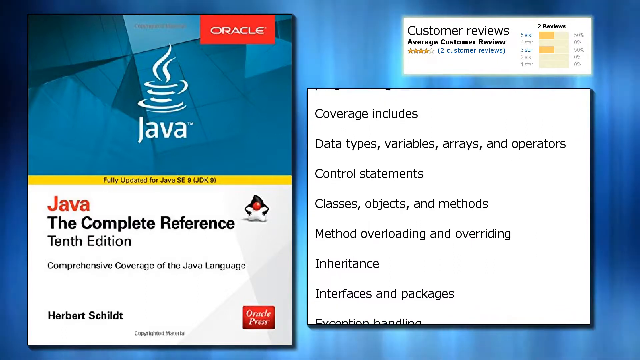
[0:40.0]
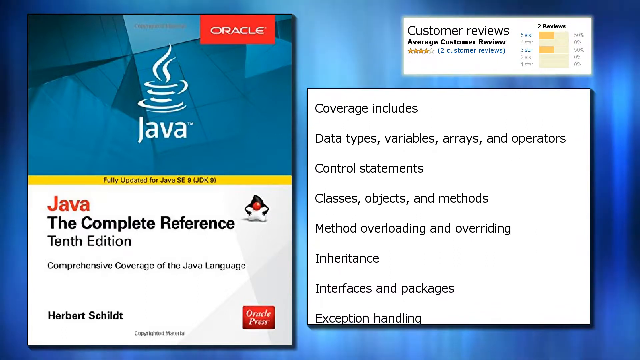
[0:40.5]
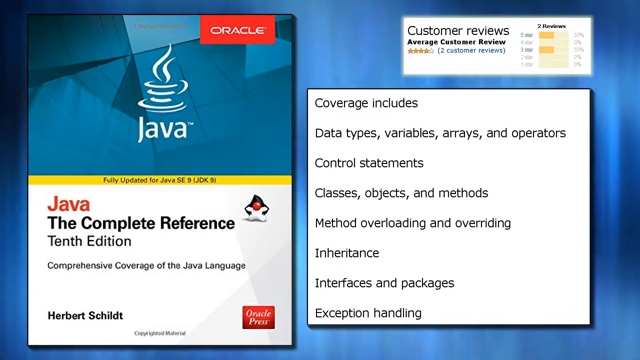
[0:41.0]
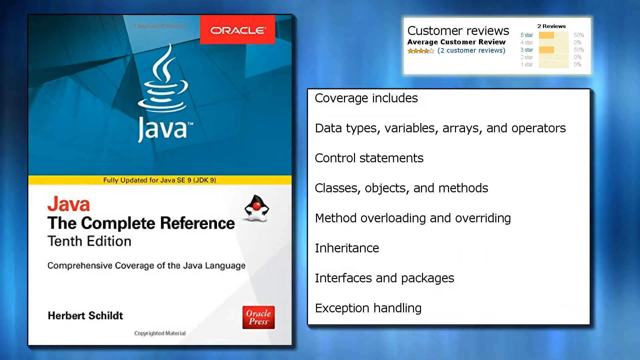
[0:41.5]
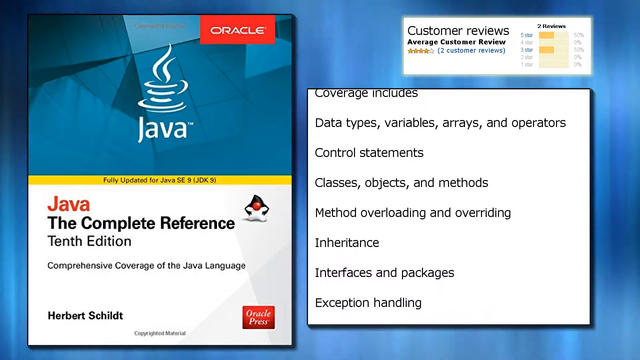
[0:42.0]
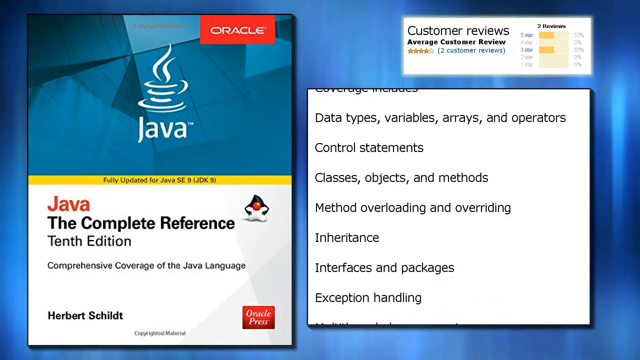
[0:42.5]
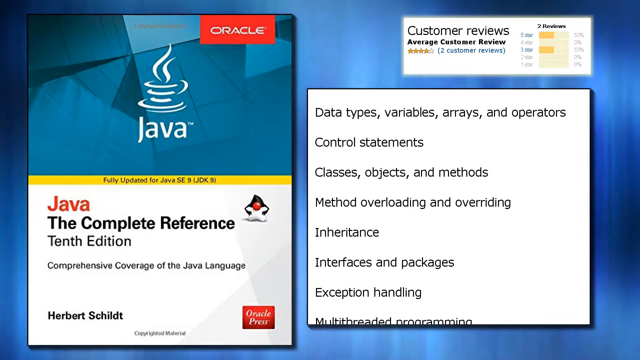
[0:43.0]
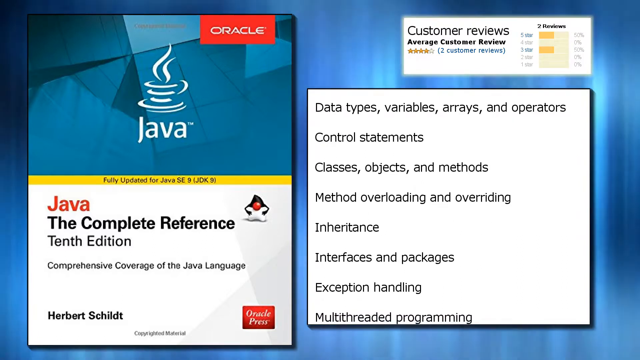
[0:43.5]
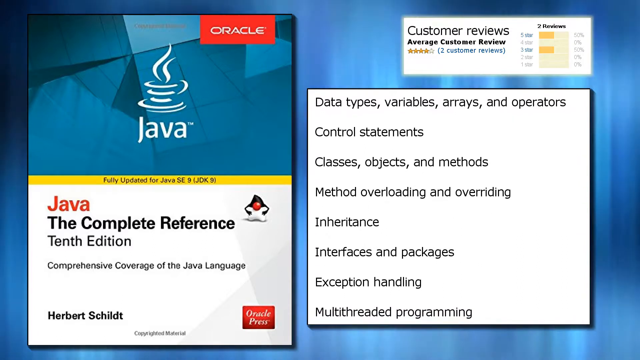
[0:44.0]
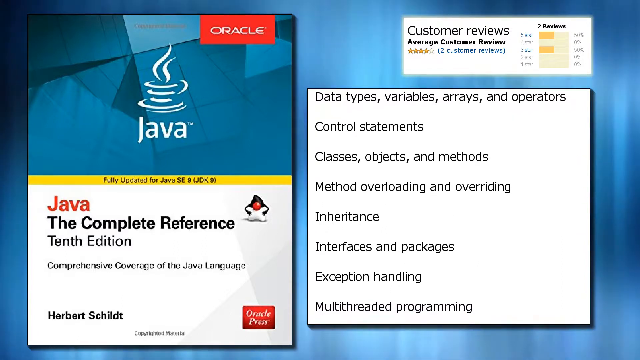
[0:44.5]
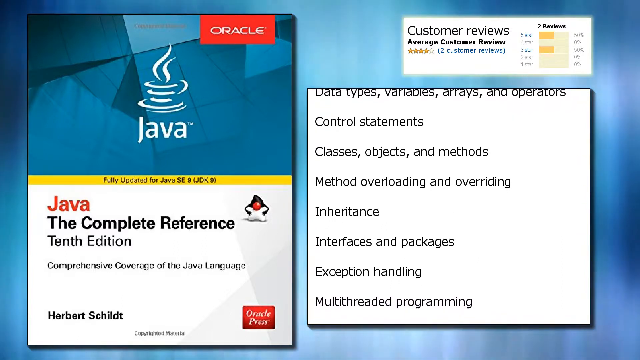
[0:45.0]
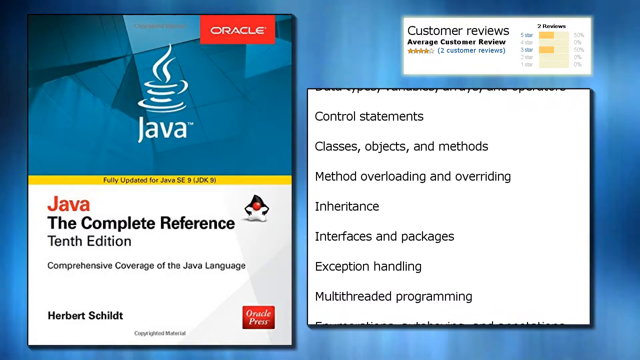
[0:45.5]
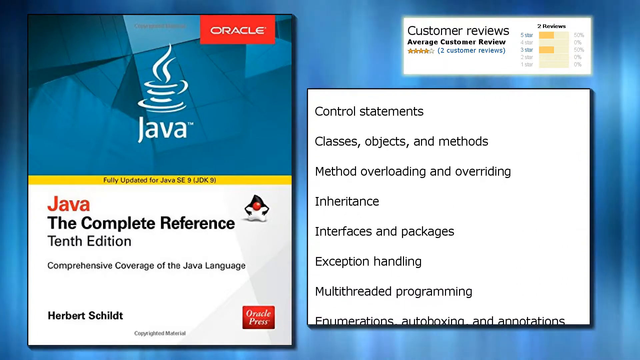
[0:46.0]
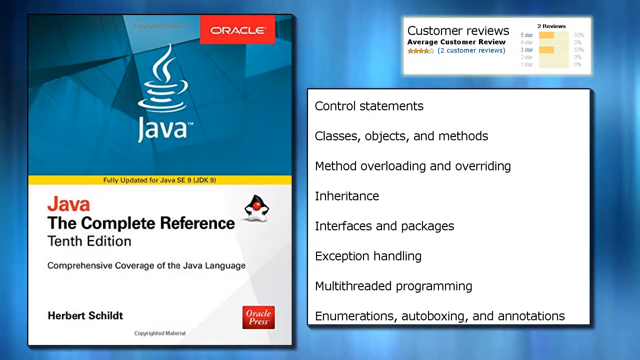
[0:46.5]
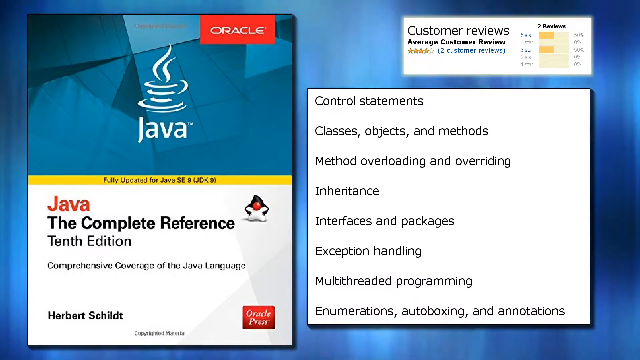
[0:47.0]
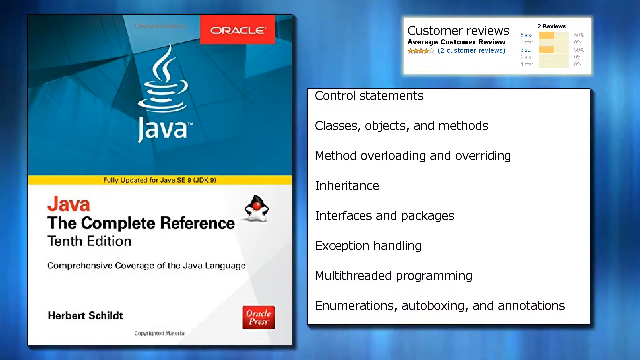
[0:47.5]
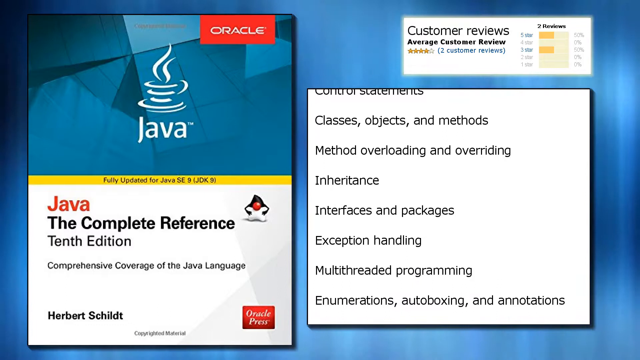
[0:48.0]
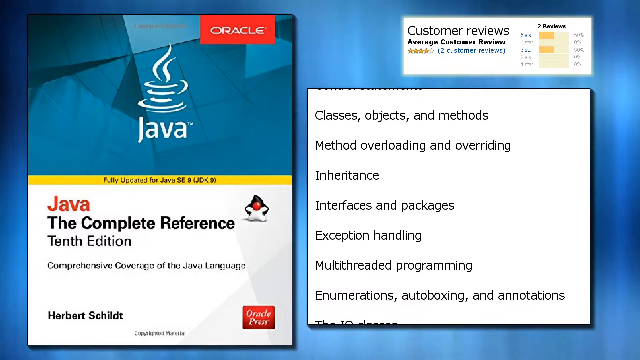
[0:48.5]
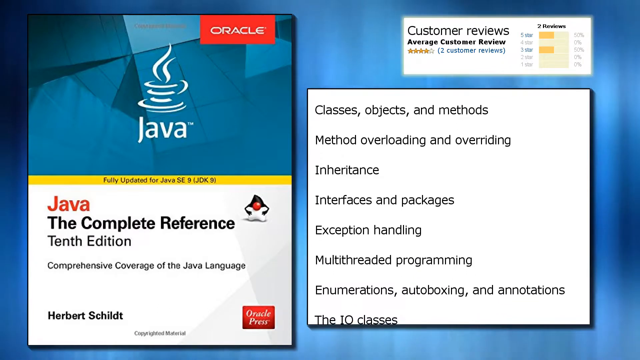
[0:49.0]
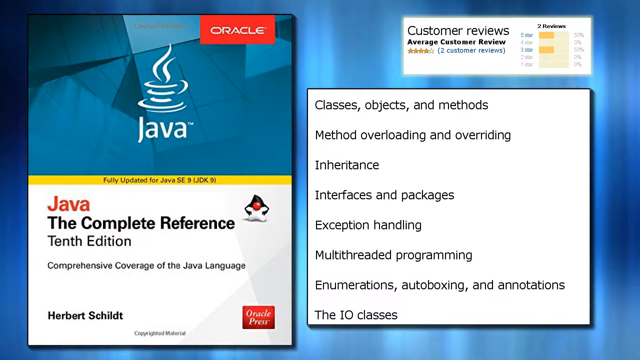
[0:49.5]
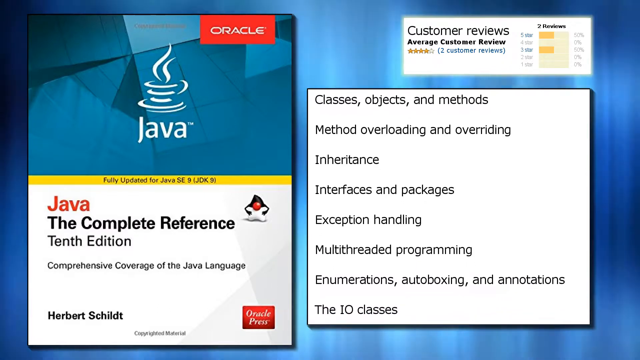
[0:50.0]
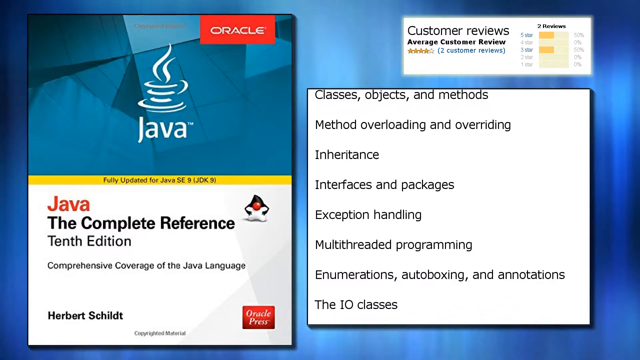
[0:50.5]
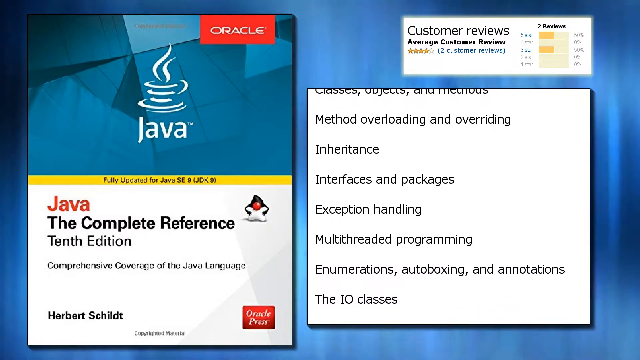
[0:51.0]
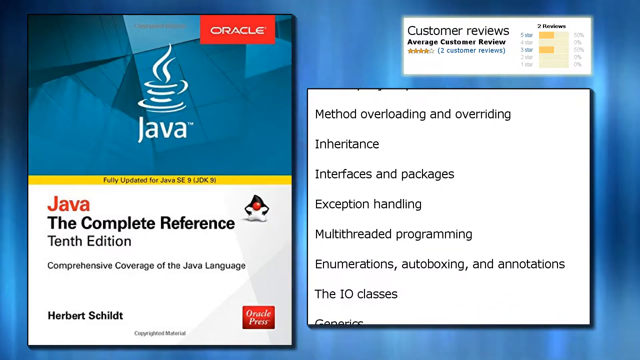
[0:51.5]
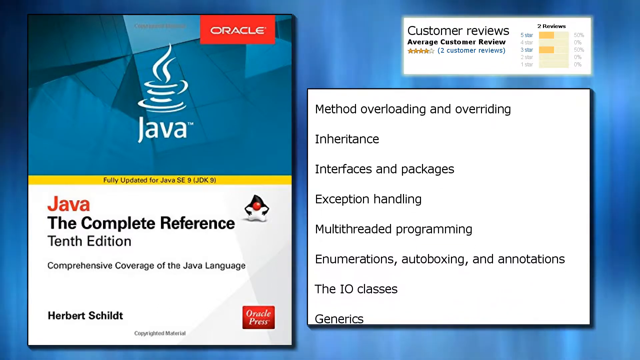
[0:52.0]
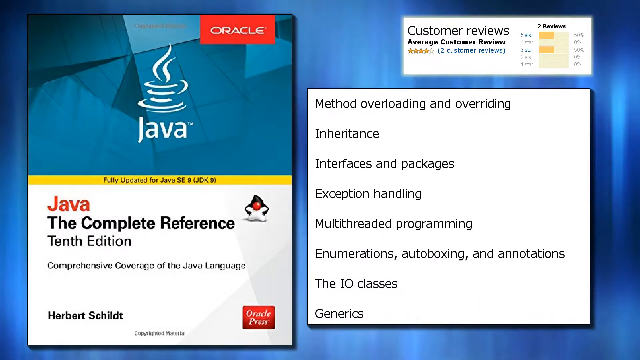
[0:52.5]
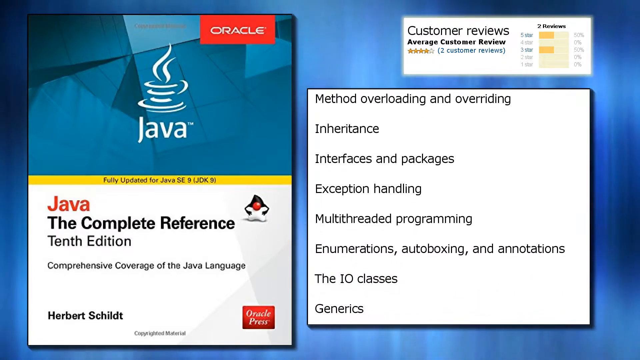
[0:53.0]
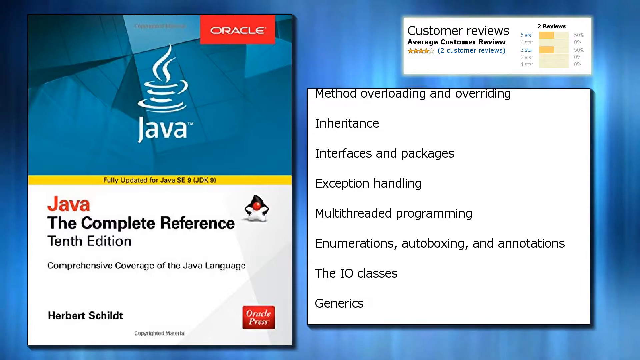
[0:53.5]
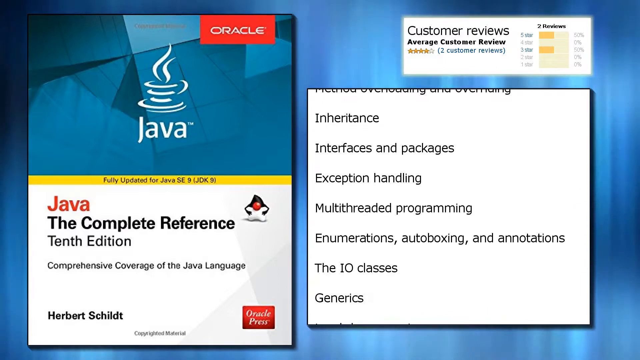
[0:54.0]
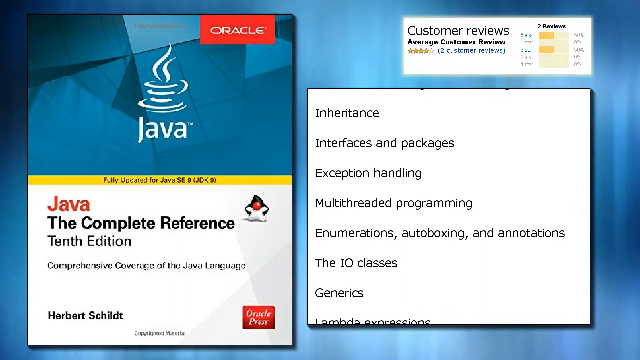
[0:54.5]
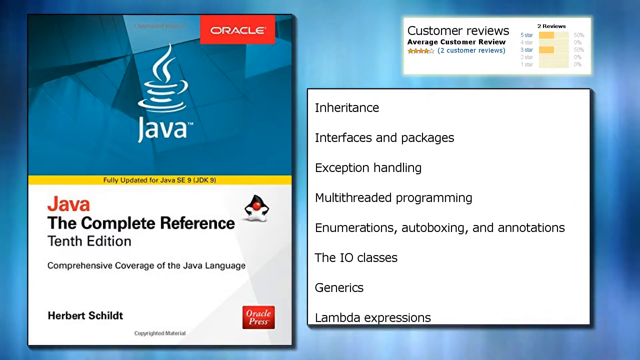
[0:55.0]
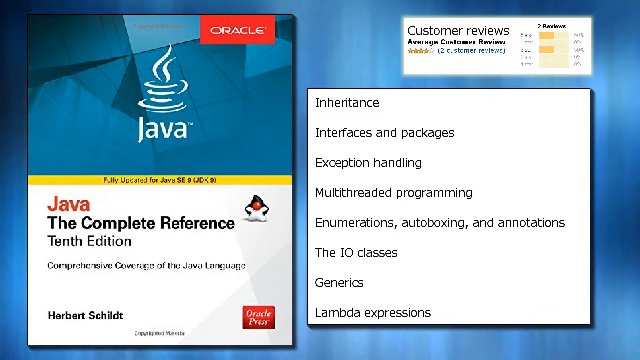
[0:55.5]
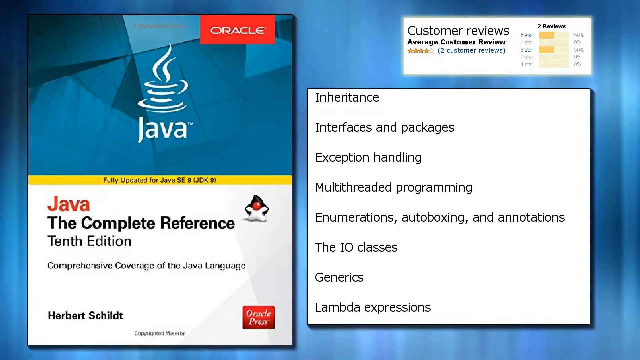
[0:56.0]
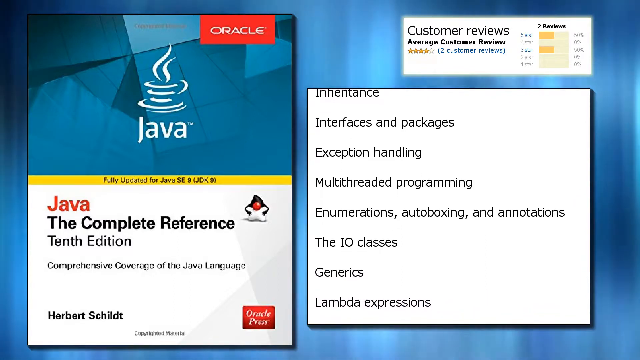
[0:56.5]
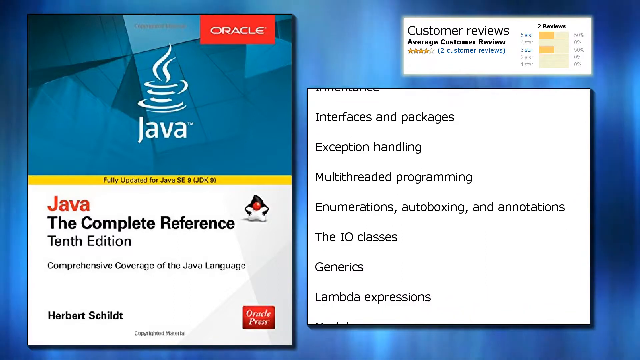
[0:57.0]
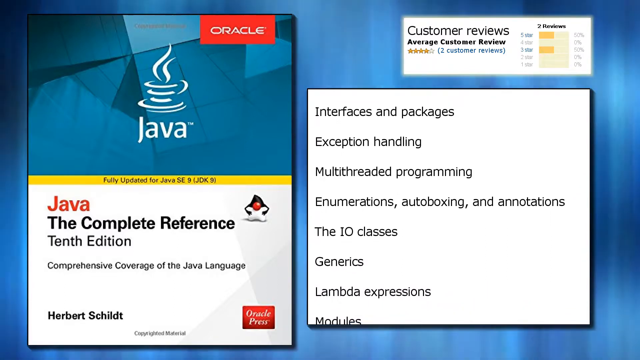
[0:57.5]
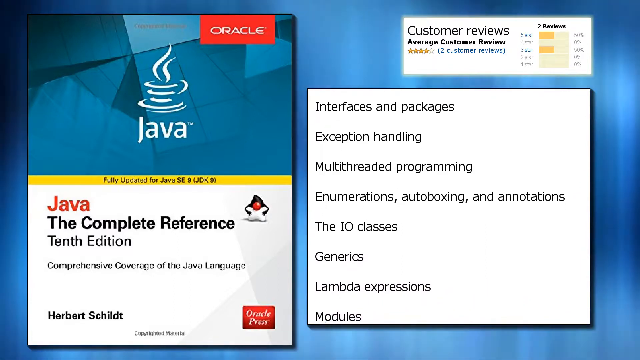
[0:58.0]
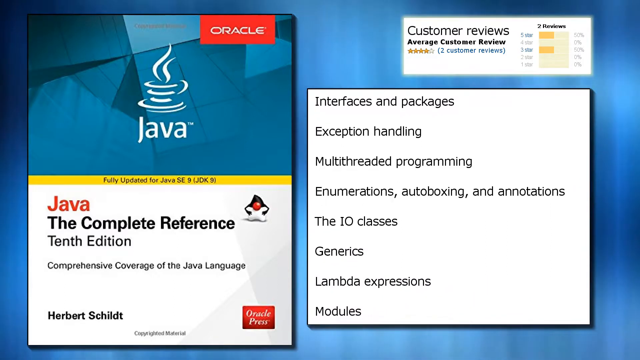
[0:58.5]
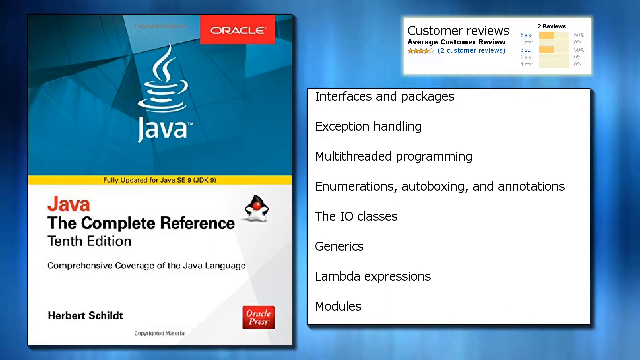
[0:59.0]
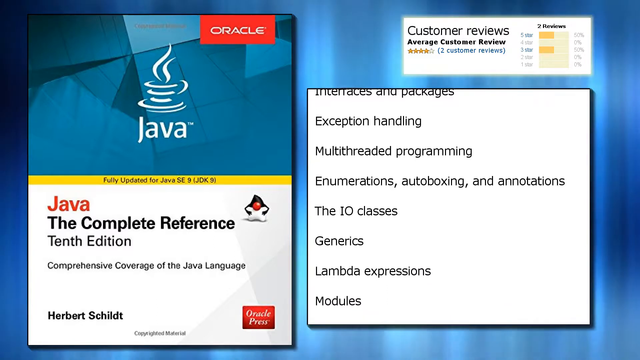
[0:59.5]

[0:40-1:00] The information box in the bottom right keeps scrolling down at a consistent pace, revealing more information on the topic. The blue background continues moving at a consistent rate, while the other areas of the screen stay still. Some of the information appears in list form, showing generics, modules, exception handling and more. Apart from the moving background and the scrolling information, nothing else happens.